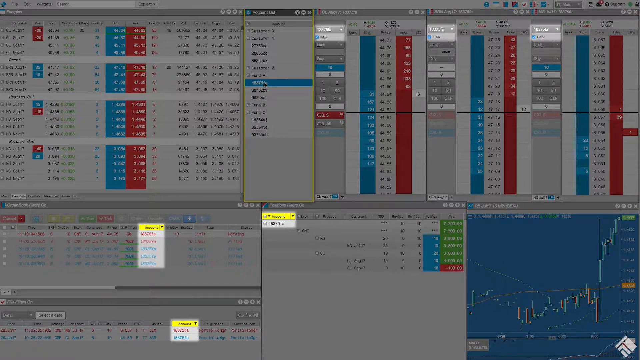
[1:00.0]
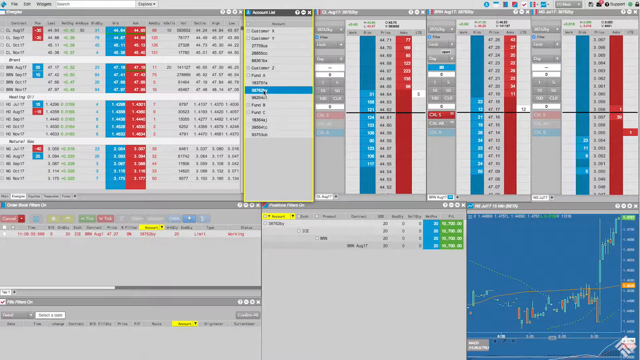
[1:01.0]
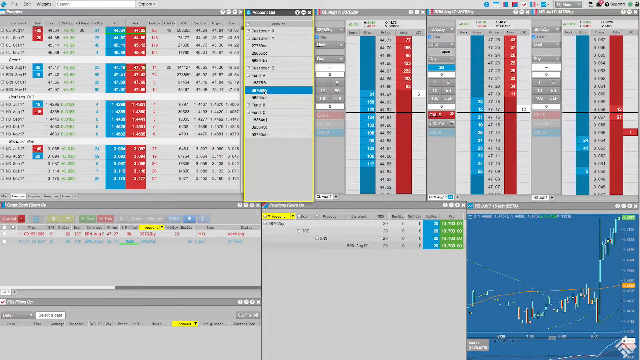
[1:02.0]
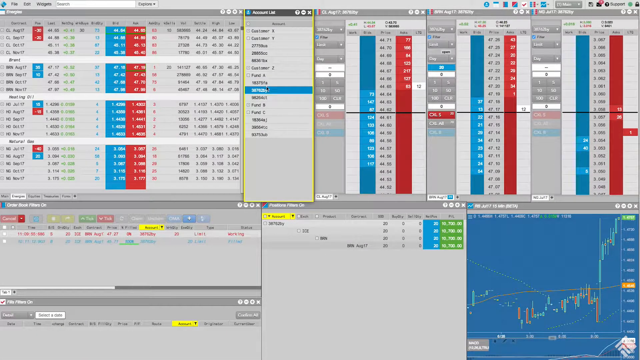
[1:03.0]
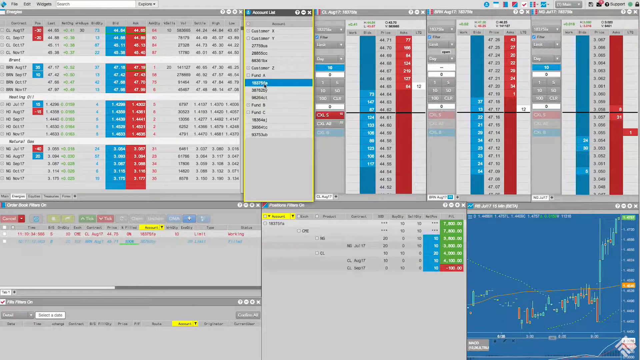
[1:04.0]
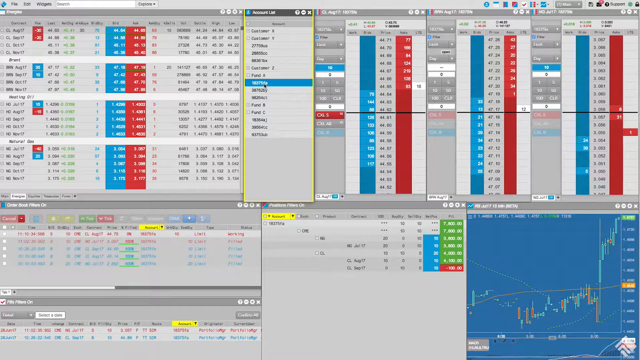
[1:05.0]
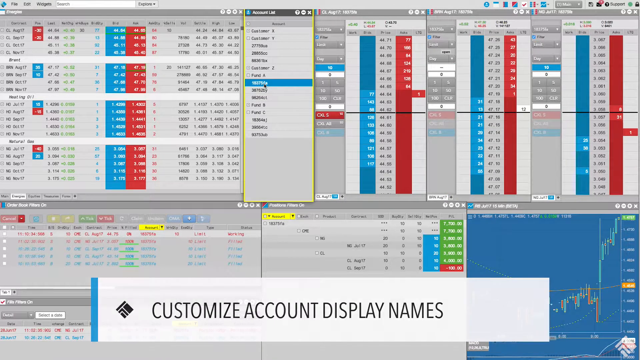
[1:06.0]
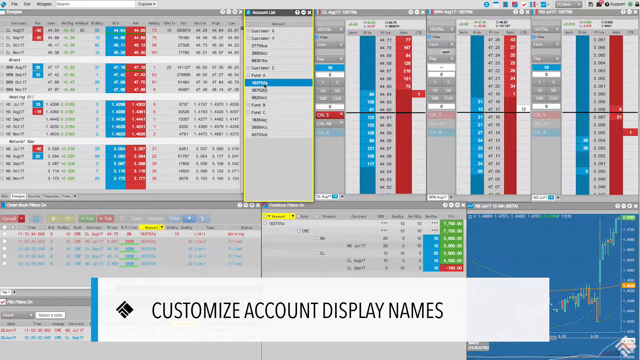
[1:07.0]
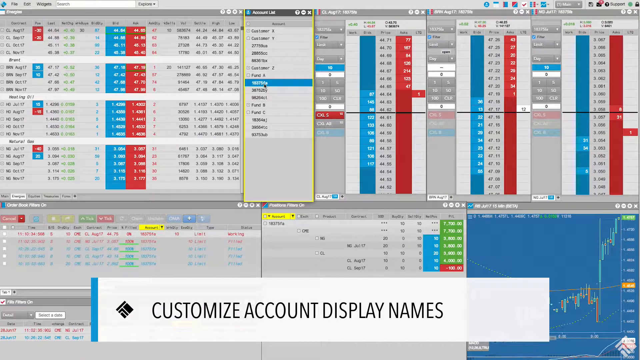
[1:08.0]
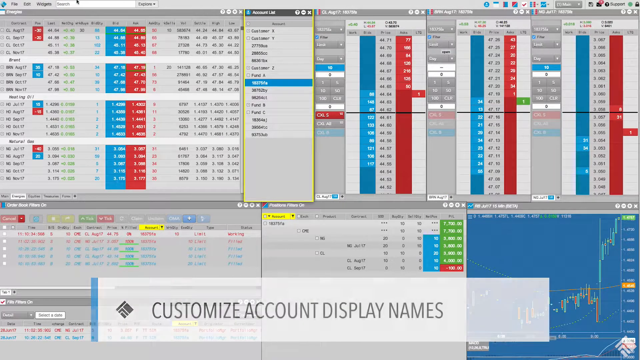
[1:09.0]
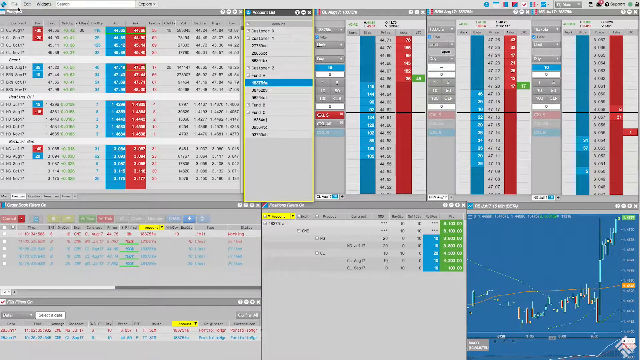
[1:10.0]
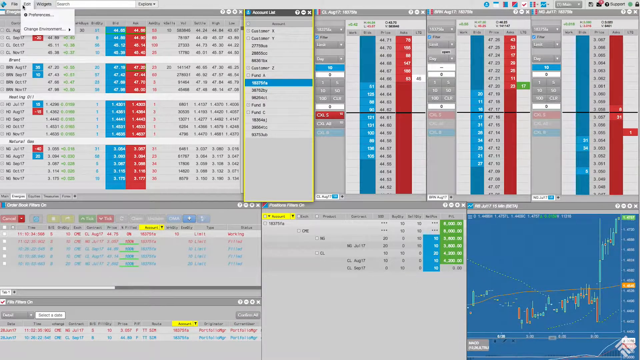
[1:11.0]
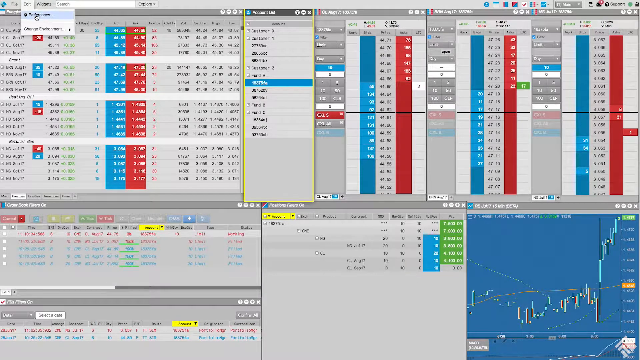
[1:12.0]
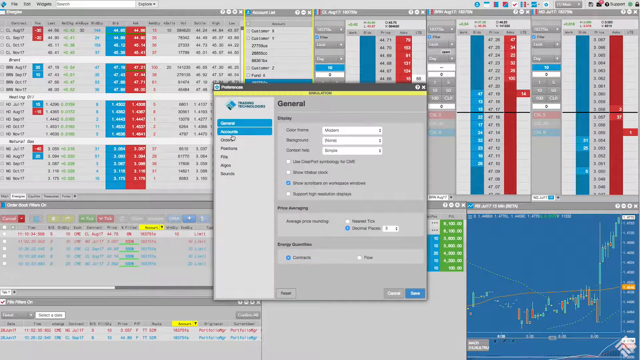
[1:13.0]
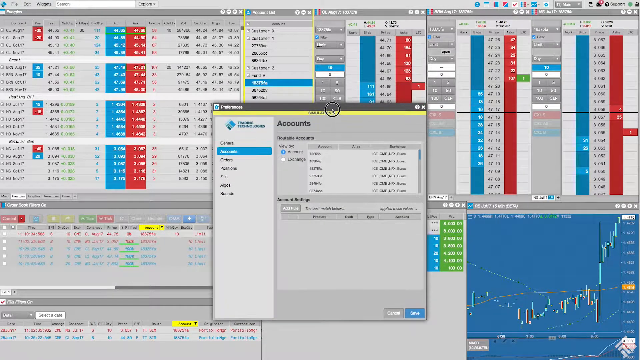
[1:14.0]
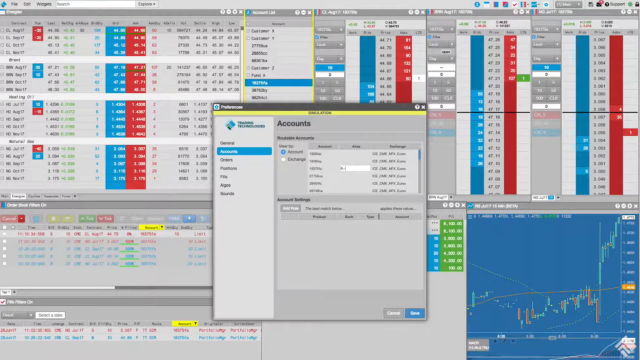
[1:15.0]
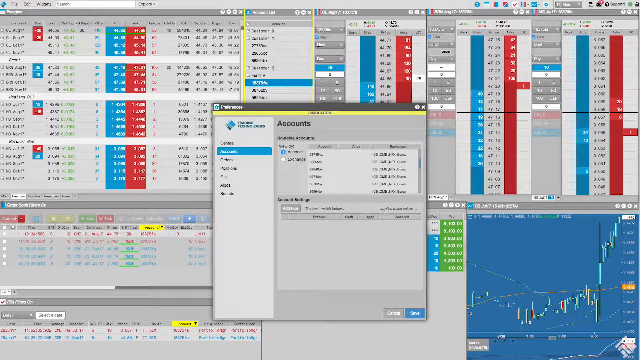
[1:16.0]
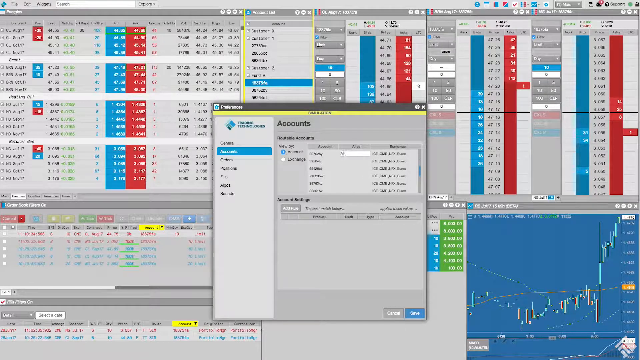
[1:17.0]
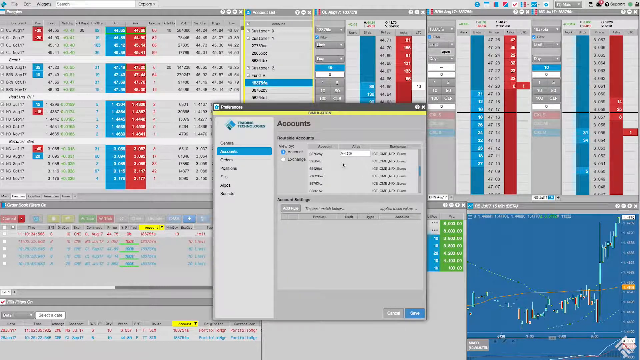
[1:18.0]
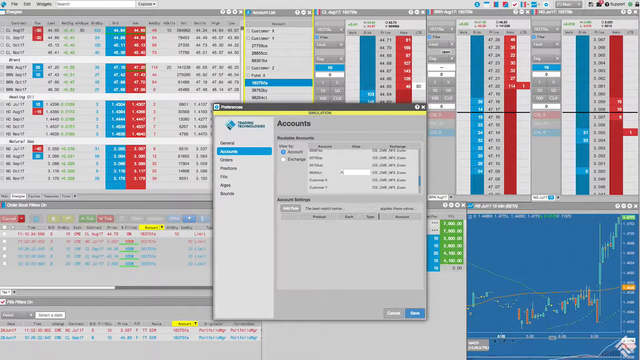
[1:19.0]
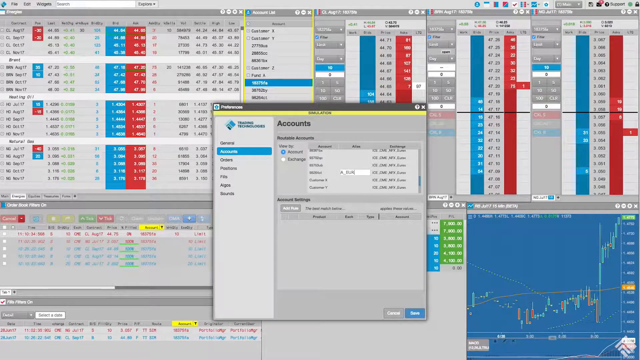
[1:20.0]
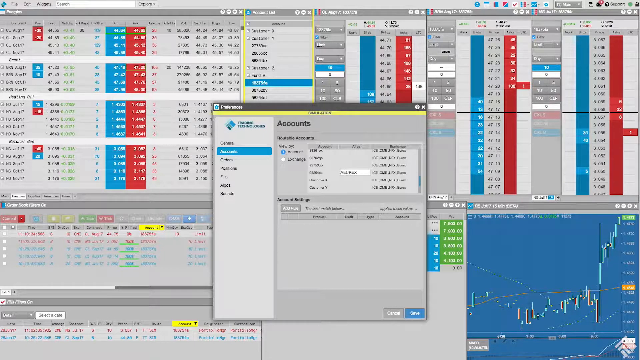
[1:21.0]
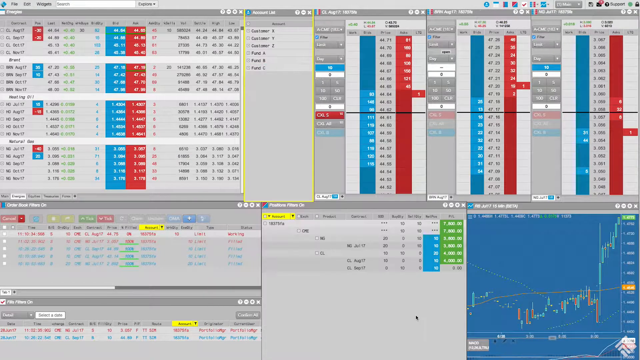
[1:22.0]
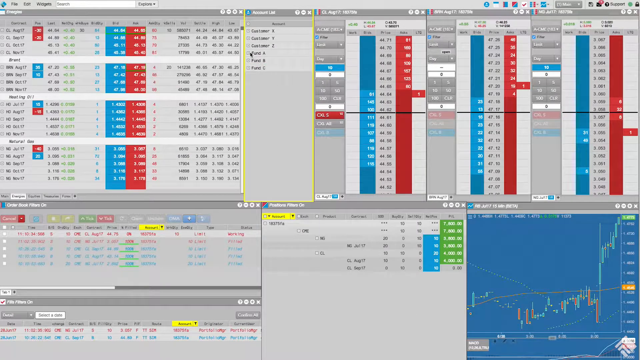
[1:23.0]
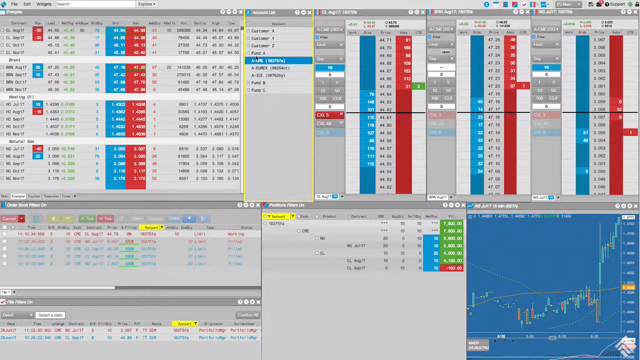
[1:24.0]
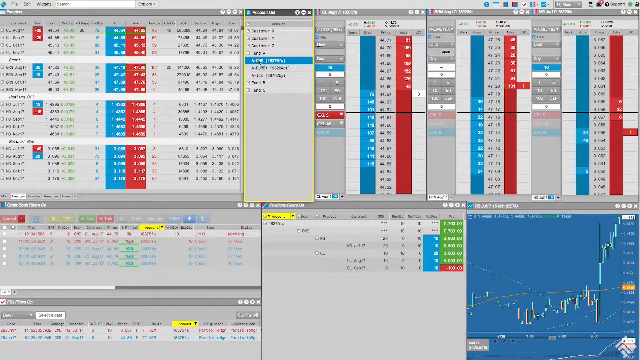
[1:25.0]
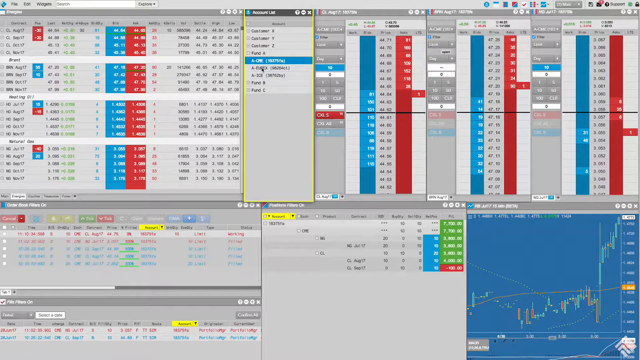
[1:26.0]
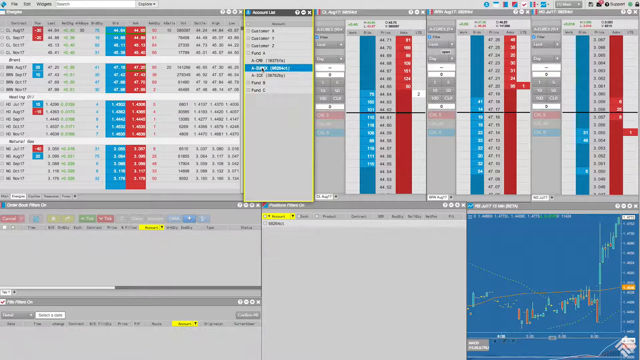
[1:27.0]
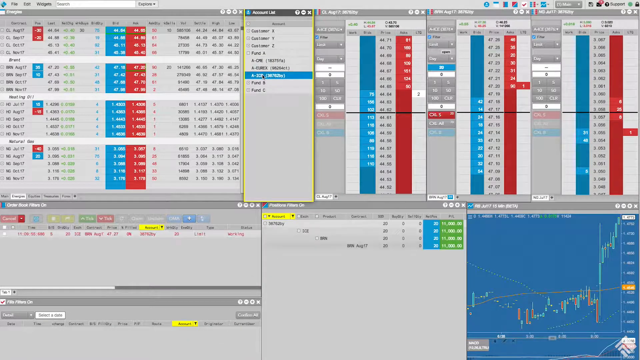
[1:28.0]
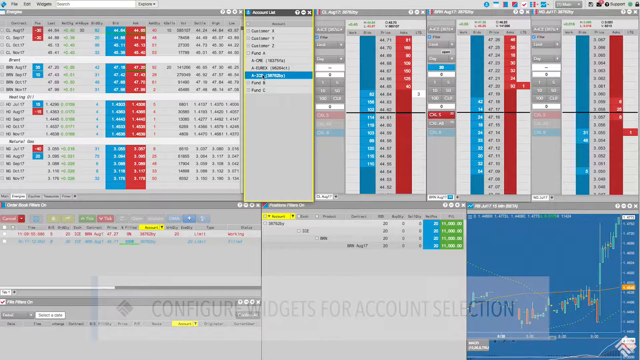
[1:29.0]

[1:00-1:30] A screen capture of someone's computer screen shows multiple windows open, all appearing to run the same application, a stock market checker. The application's colors are blue and red, with some green in the middle bottom window. At first the video is grayscale, or slightly faded, with a few highlighted boxes. Then the screen returns to normal, and the user clicks on different settings in a small window tab, which changes a few windows that pop up. He opens a new box, types something in, and a bunch of the numbers on the screen change. He does this about three times, typing something in to change numbers, and then closes the box. He goes back to the original smaller panel box he had open and selects one of the options toward the center of the listed options.